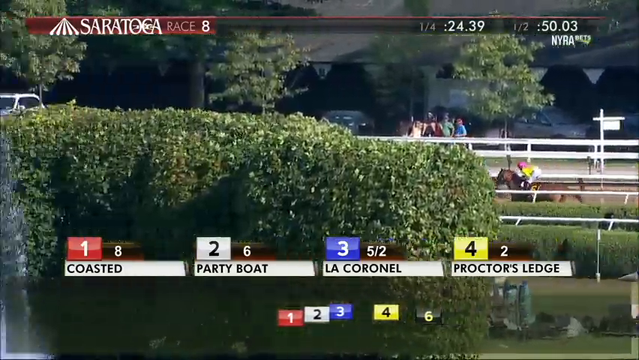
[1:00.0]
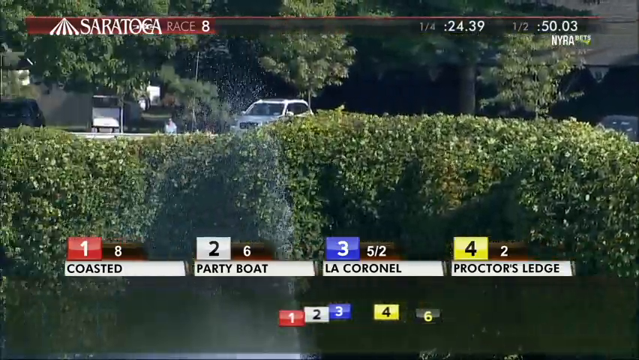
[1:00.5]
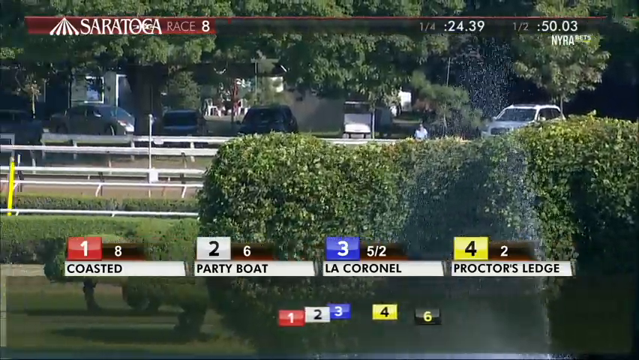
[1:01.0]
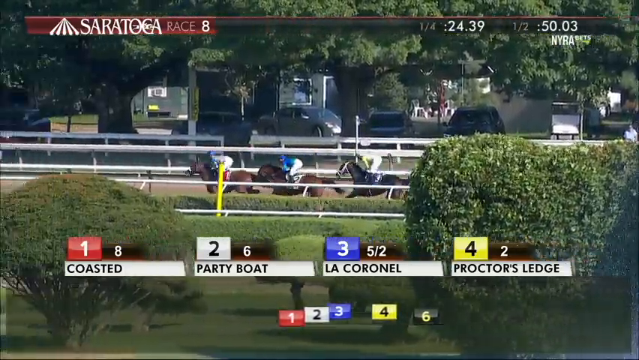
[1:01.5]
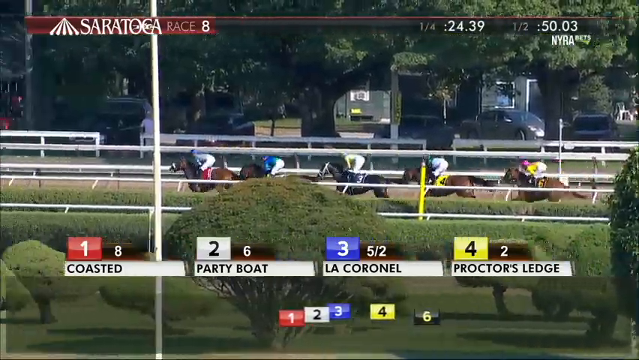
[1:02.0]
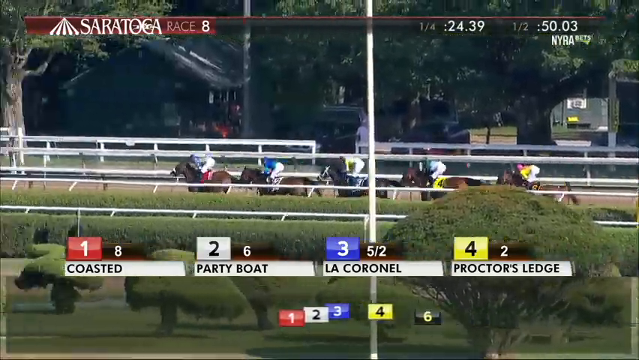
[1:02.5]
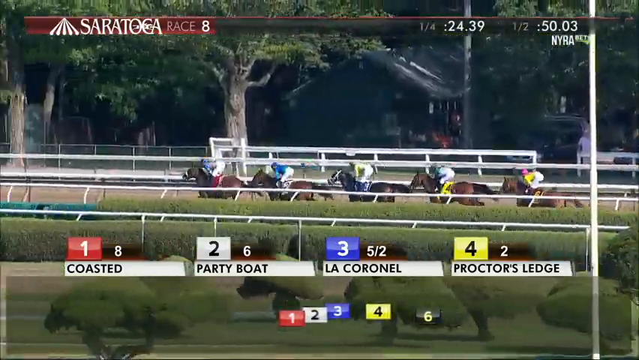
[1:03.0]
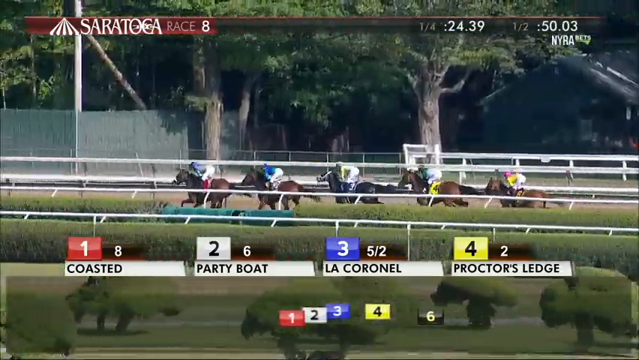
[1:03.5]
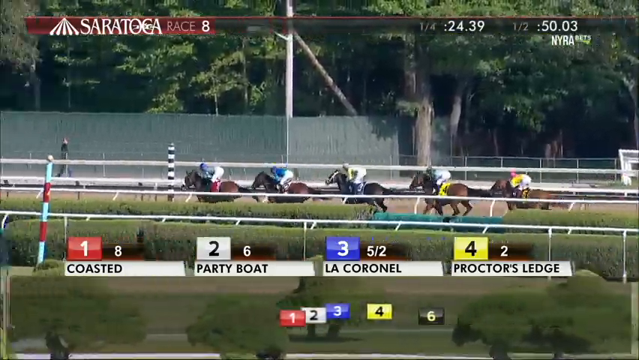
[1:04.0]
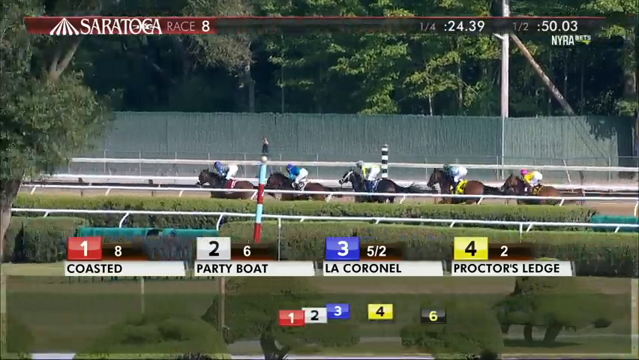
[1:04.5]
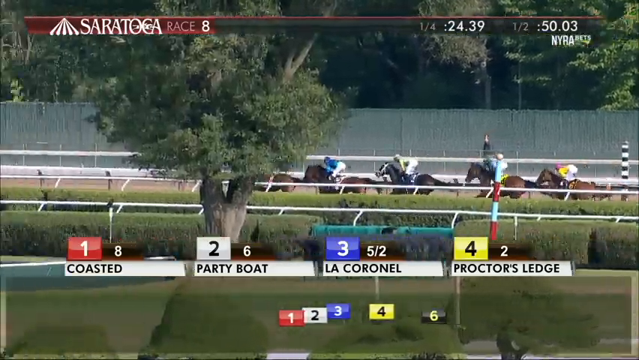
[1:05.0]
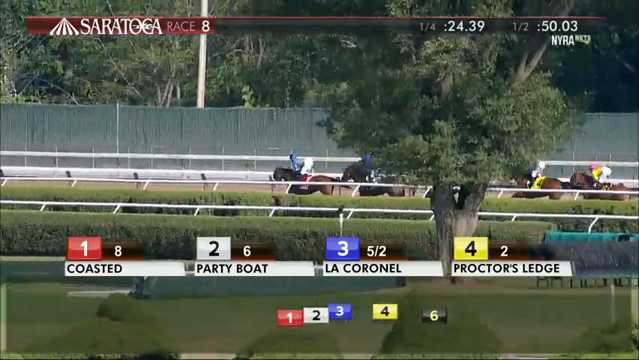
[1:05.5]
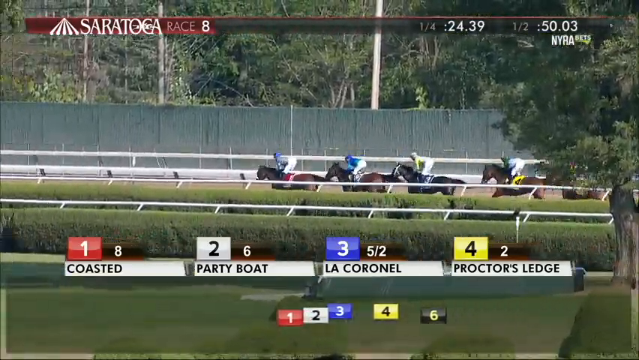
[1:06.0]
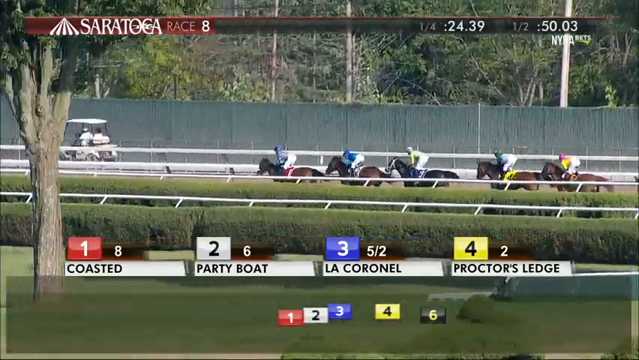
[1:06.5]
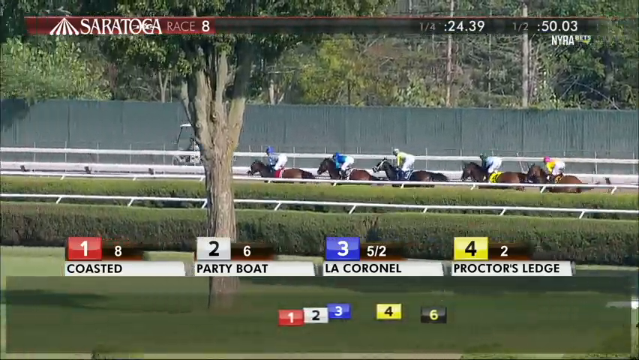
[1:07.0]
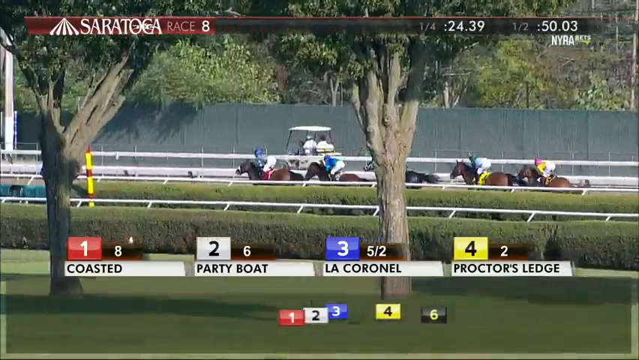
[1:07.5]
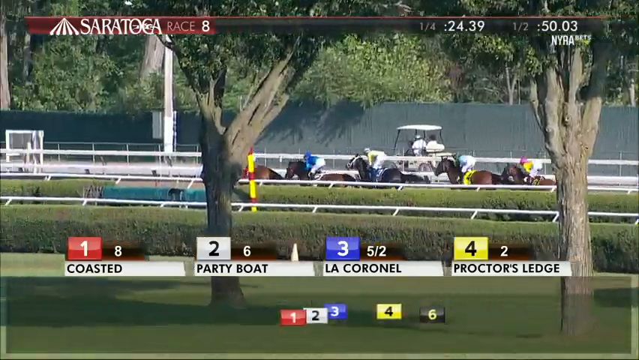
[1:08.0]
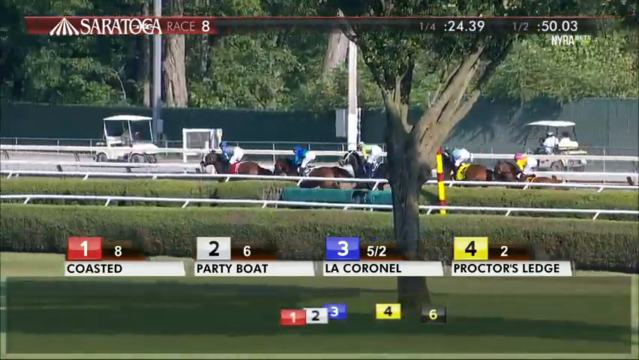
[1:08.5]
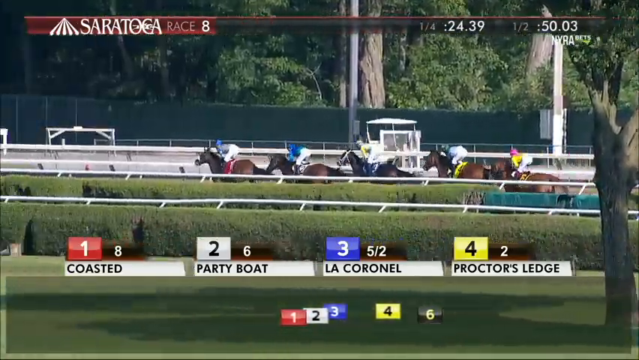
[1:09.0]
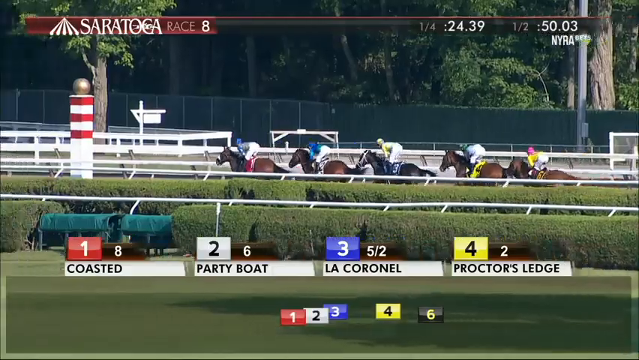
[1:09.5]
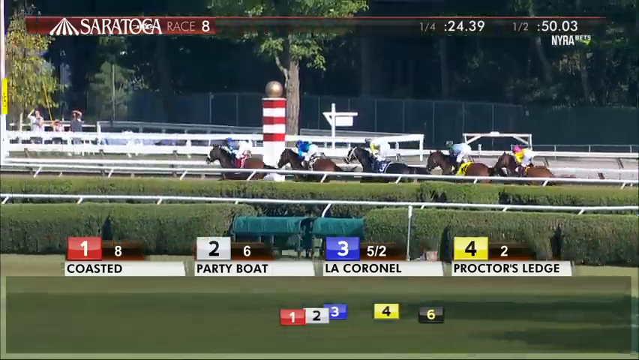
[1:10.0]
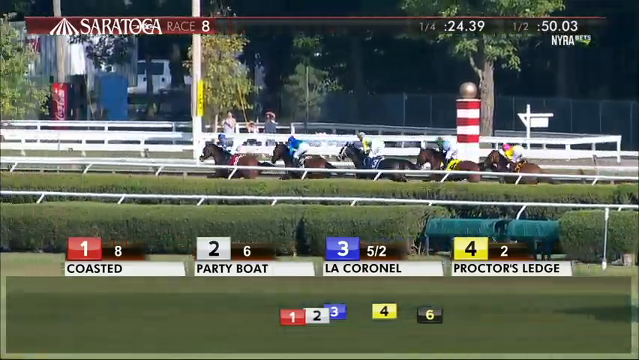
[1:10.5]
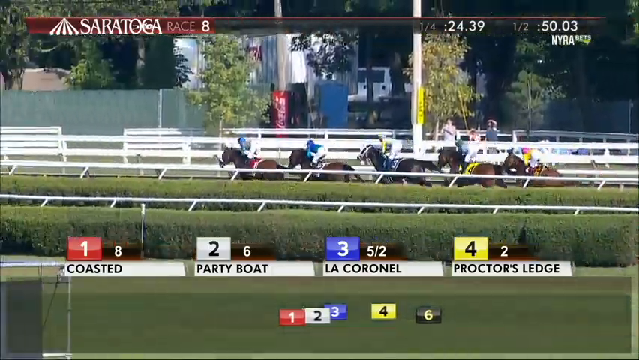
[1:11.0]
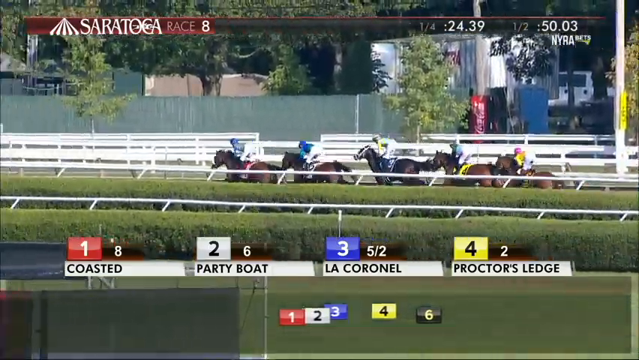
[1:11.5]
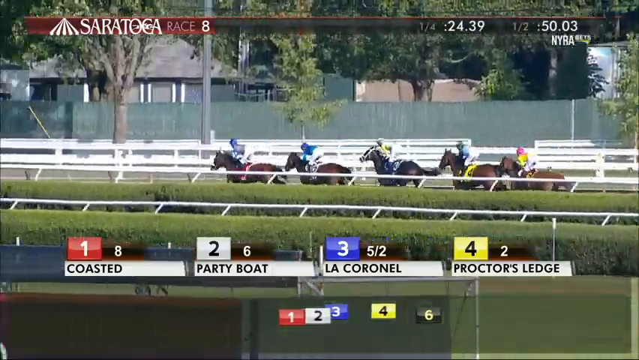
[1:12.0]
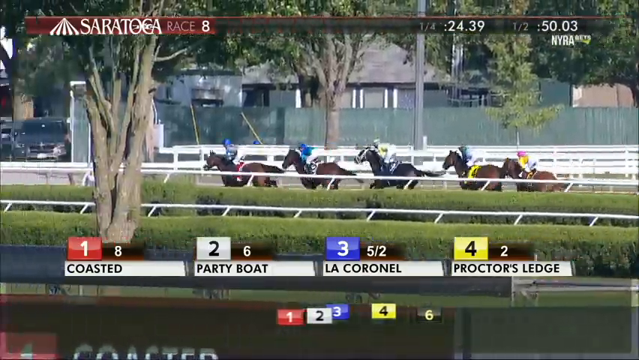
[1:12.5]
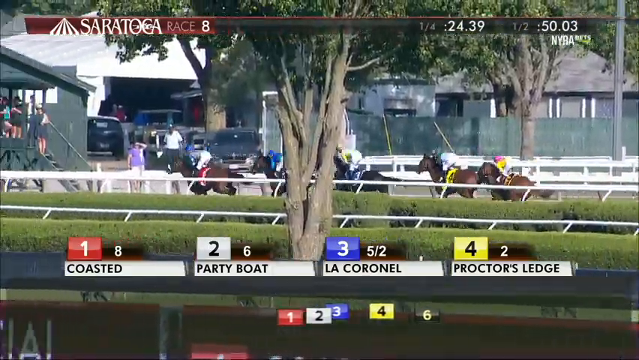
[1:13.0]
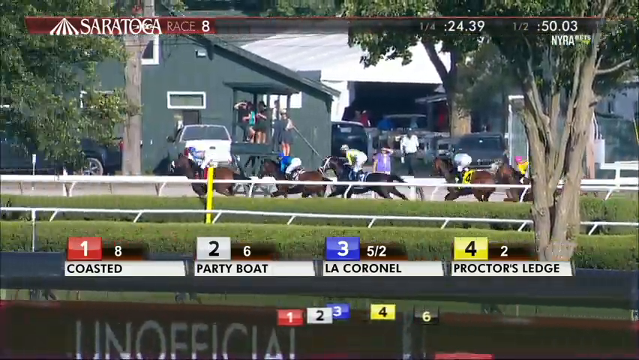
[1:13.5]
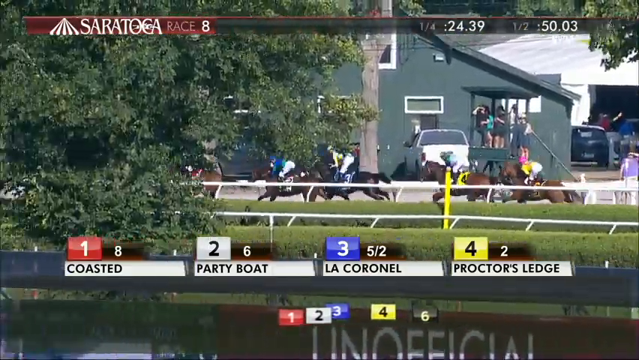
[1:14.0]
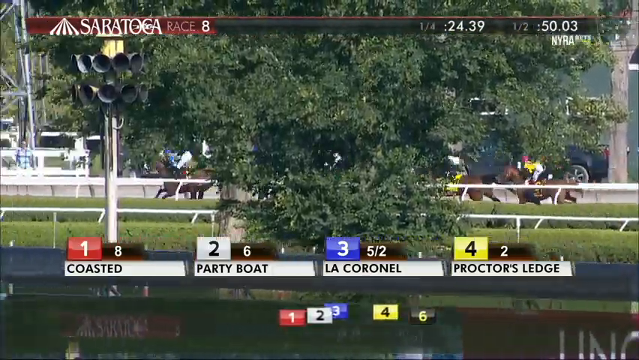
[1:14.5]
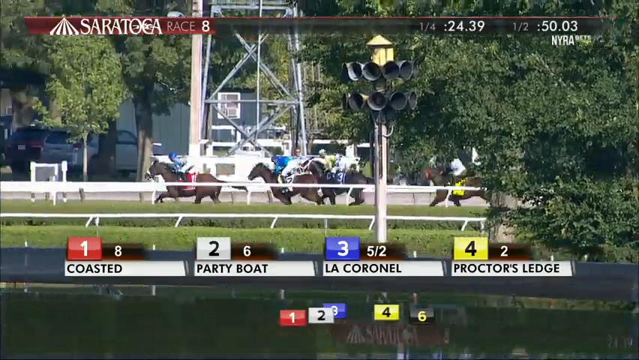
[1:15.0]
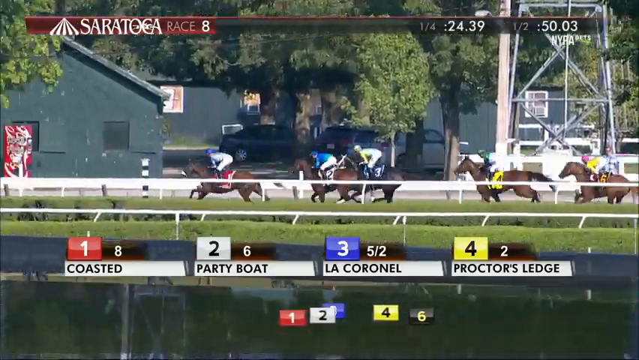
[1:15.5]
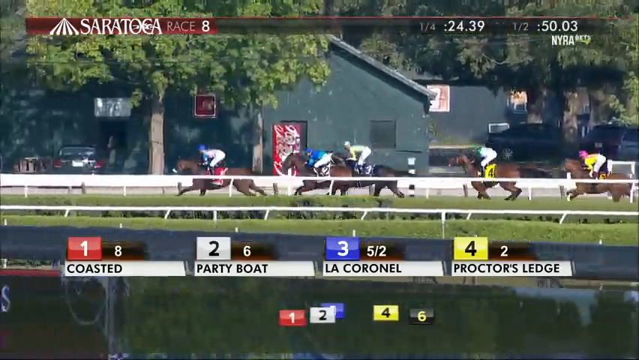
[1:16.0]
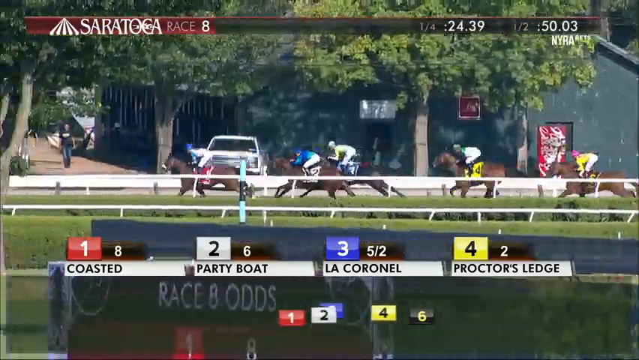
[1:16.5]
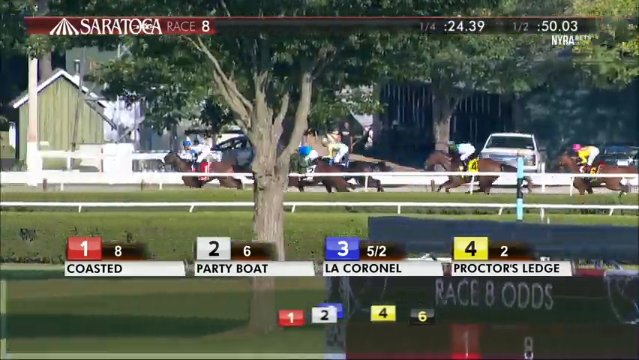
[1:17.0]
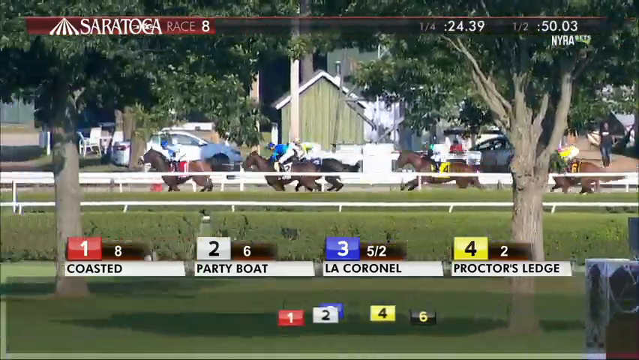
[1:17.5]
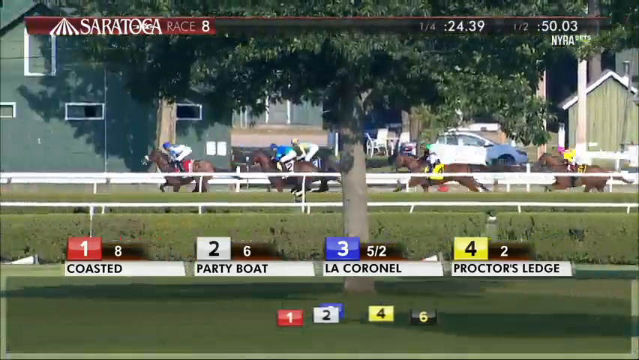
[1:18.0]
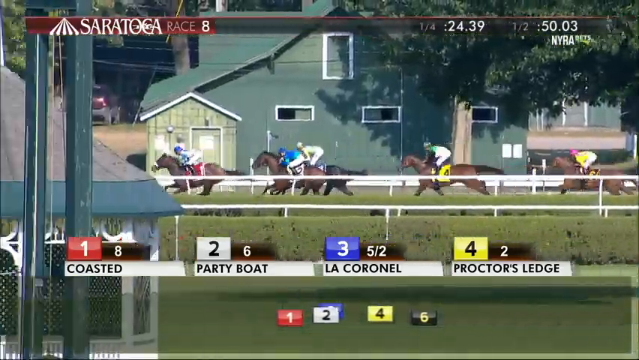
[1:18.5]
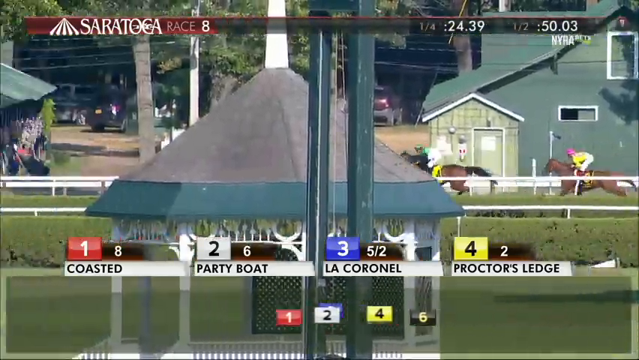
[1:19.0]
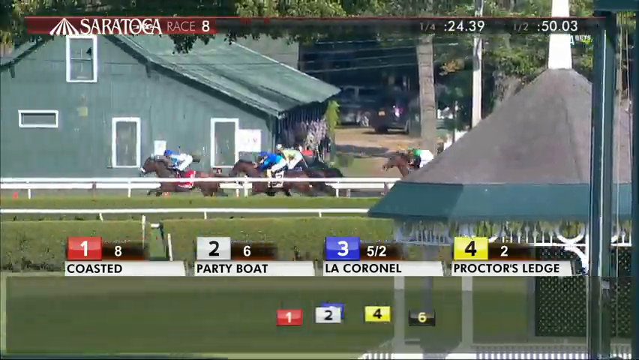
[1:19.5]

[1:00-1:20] Bushes block the view while the horses are on the other side, then the horses come out into full view. The camera is on one side of the track and the horses run on the other side, going right to left. According to the graphics, horse number one is still first and horse number two is second. The horses keep running and enter another turn, slowly turning left on the curve, and then the video goes back to the initial screen. It is a sunny day, with sun reflecting off parts of the bushes and trees. There seem to be cars in the background on the other side of the track, onlookers watching, and something like a clubhouse, a rather large building in the background.